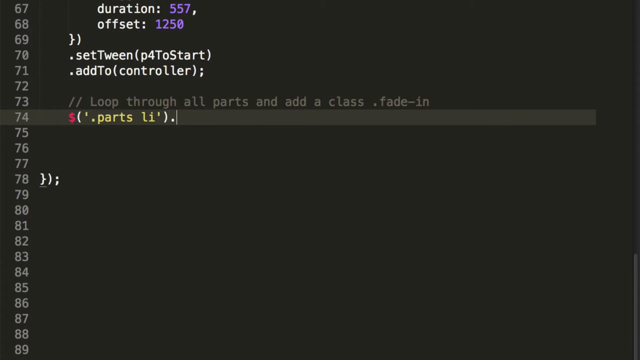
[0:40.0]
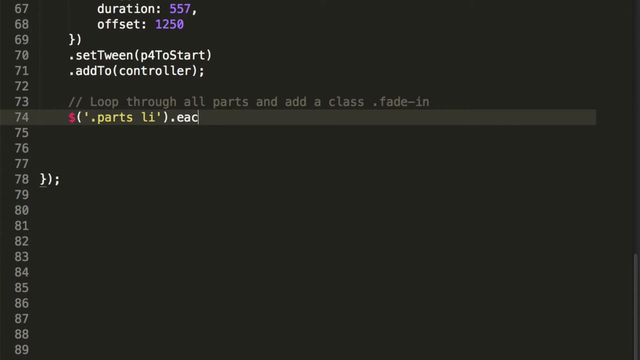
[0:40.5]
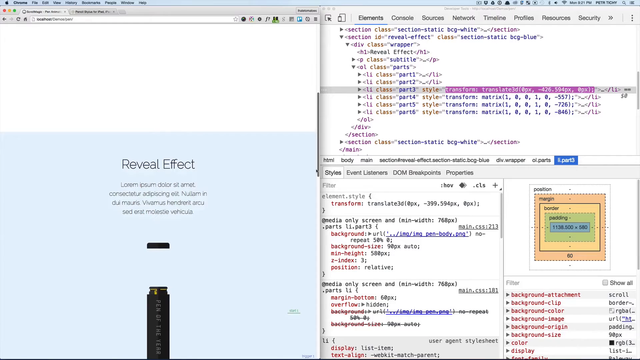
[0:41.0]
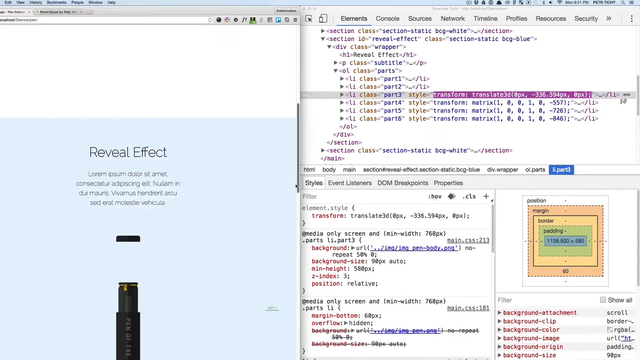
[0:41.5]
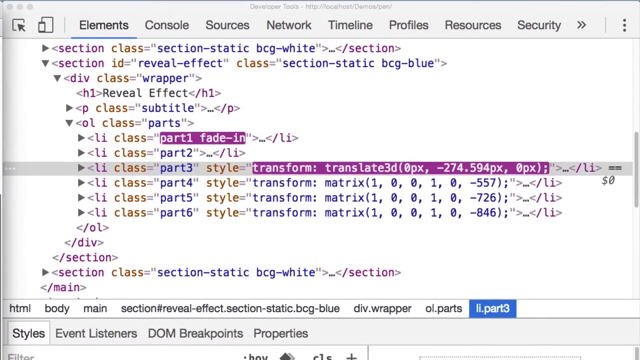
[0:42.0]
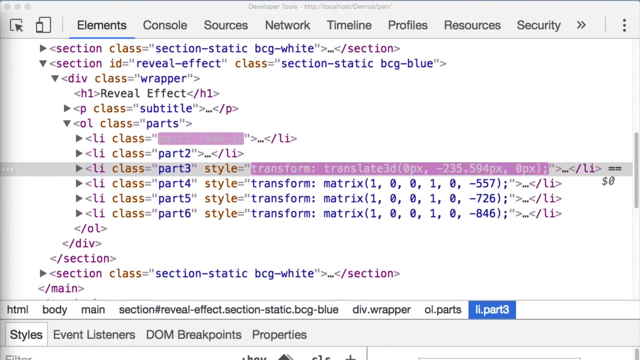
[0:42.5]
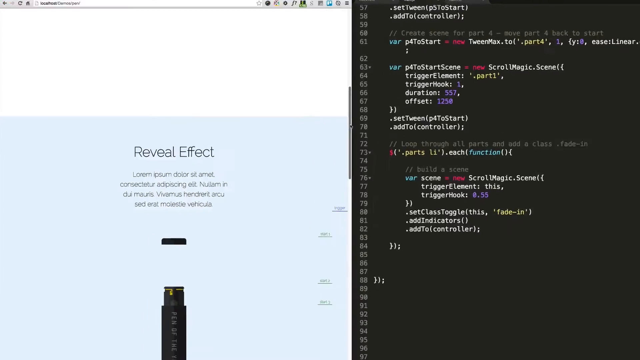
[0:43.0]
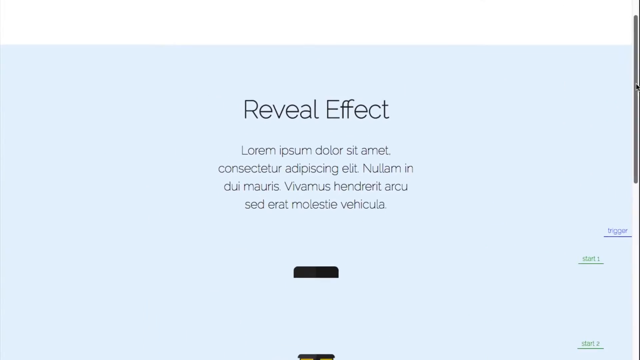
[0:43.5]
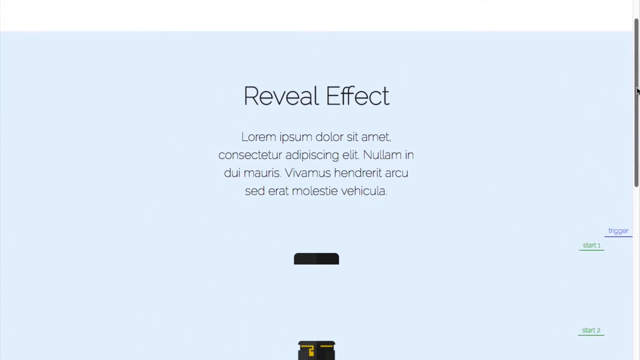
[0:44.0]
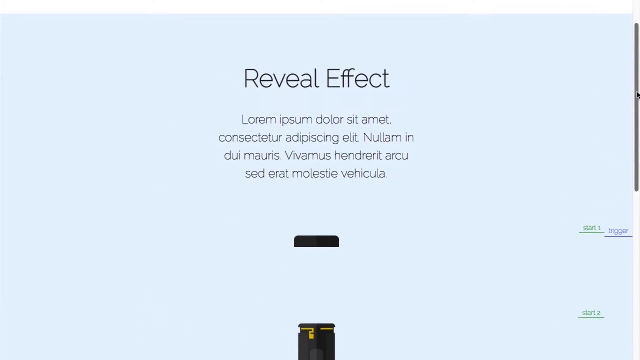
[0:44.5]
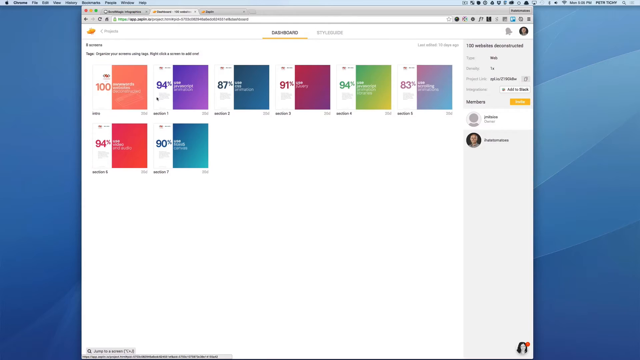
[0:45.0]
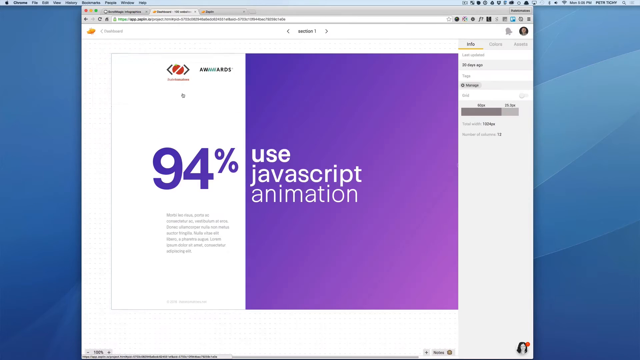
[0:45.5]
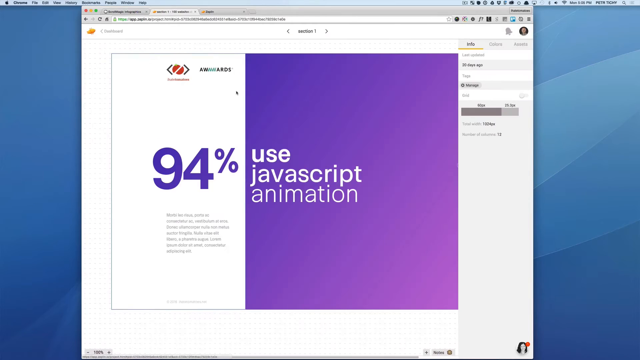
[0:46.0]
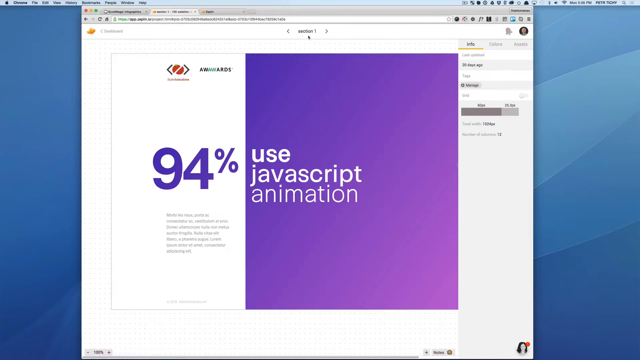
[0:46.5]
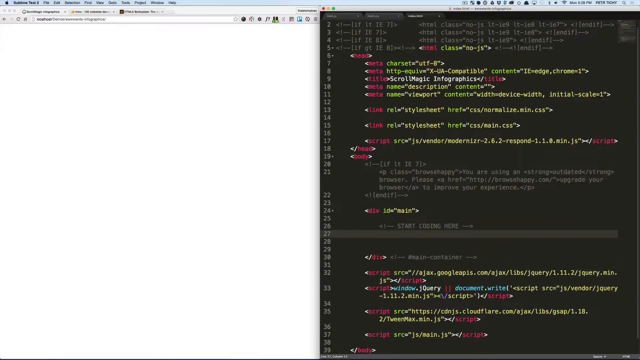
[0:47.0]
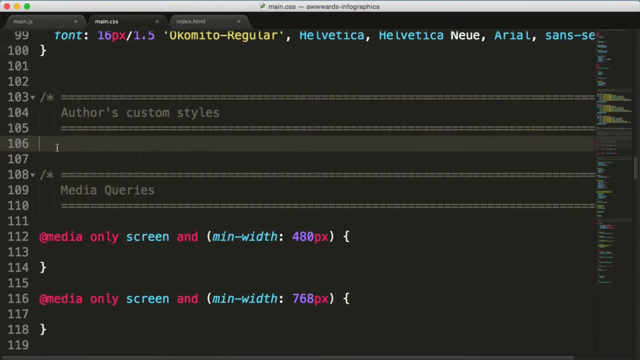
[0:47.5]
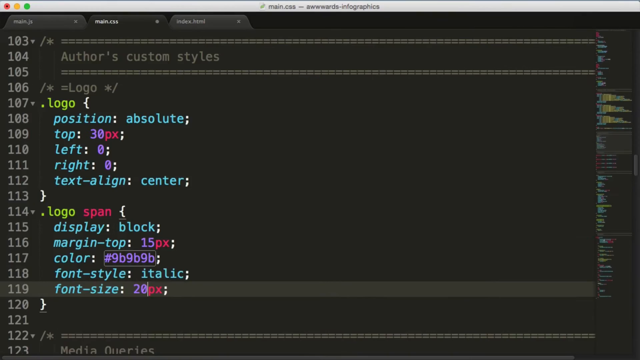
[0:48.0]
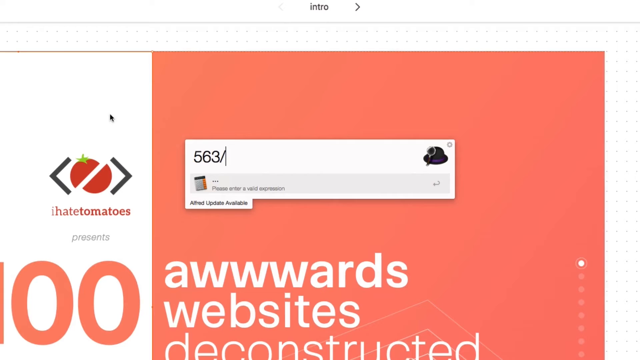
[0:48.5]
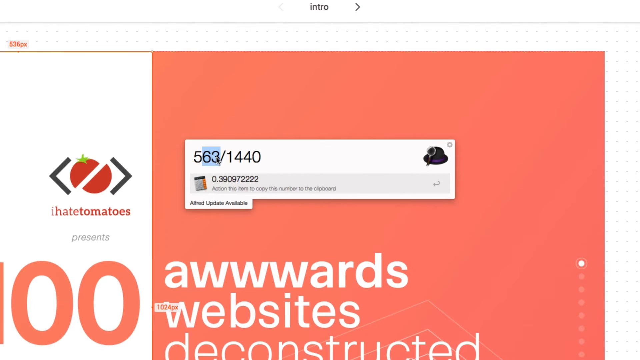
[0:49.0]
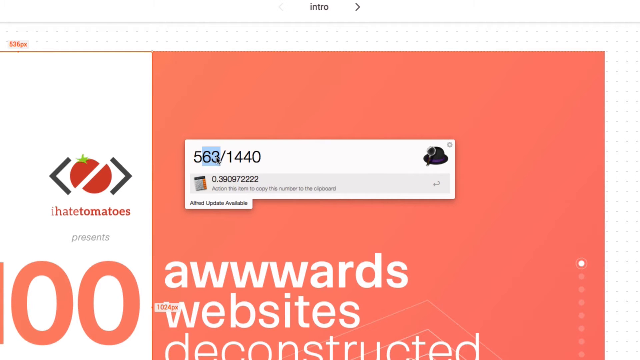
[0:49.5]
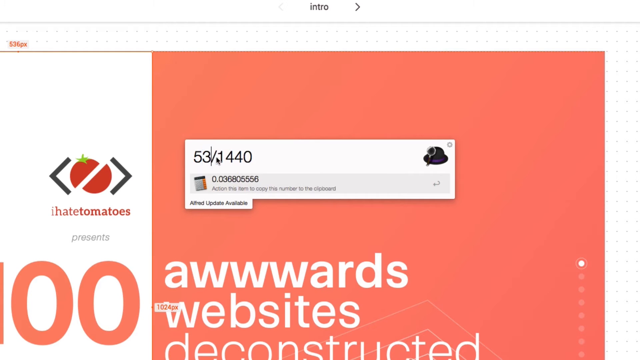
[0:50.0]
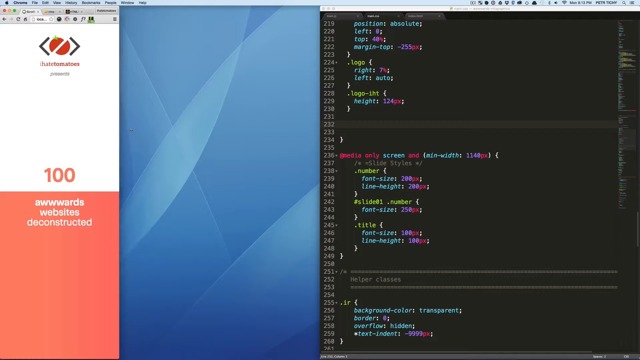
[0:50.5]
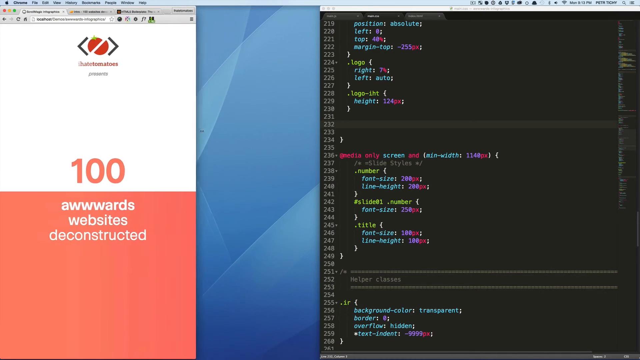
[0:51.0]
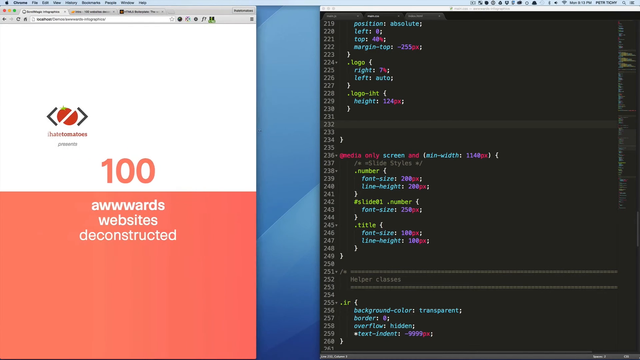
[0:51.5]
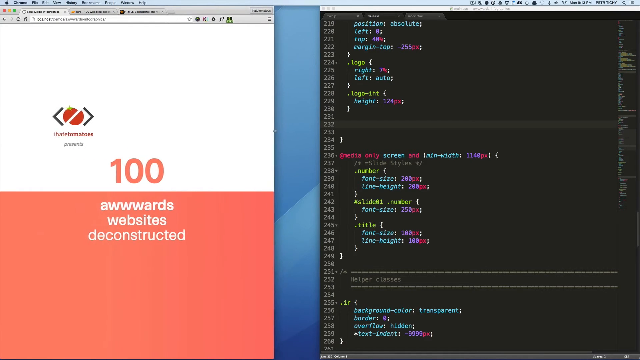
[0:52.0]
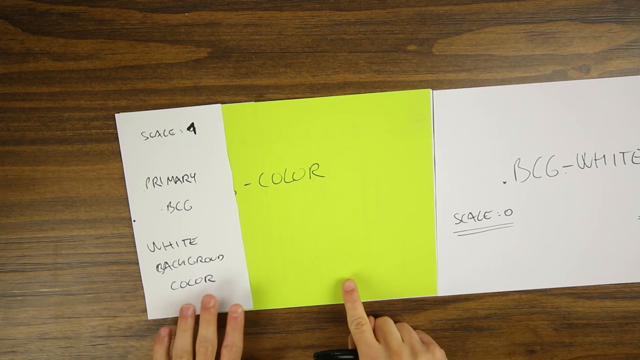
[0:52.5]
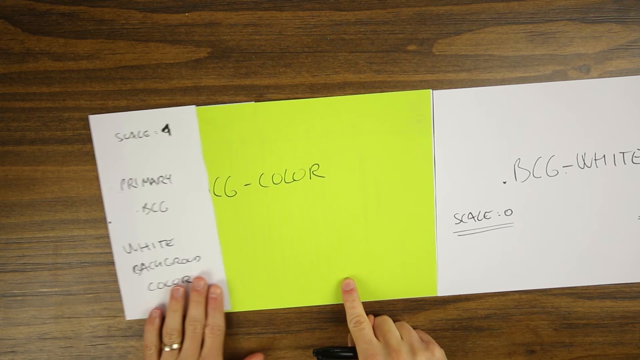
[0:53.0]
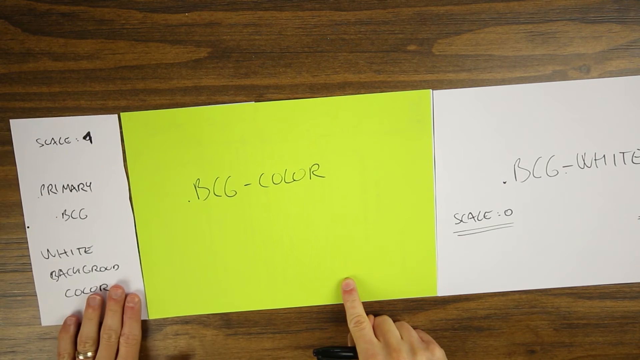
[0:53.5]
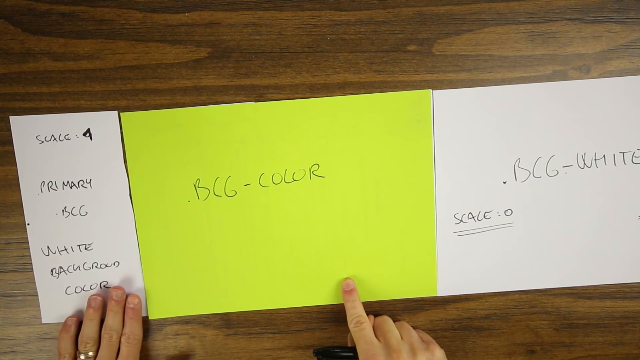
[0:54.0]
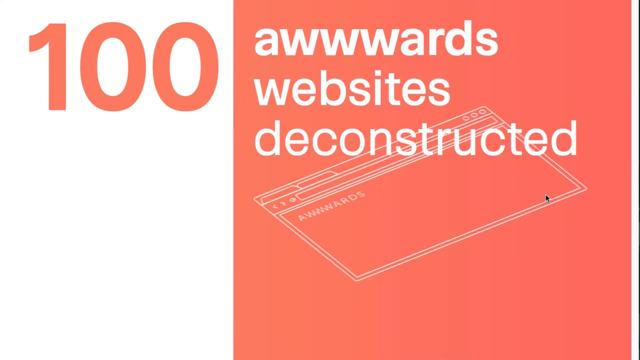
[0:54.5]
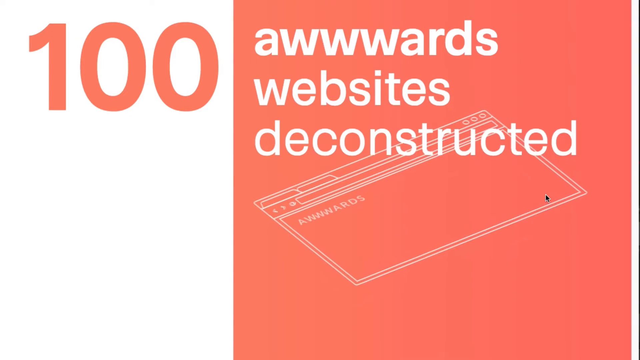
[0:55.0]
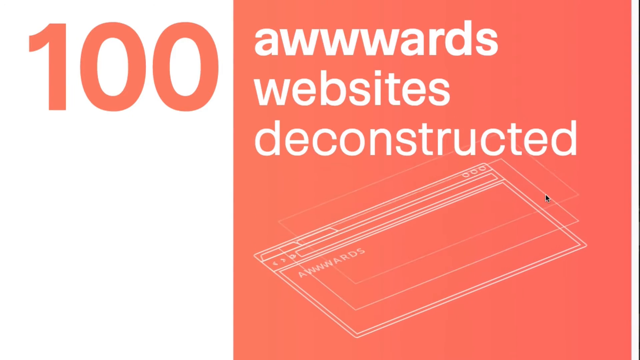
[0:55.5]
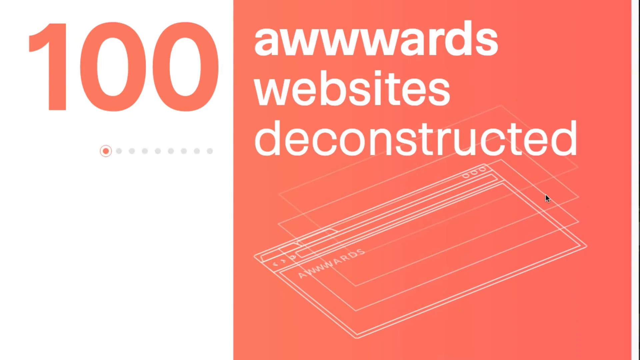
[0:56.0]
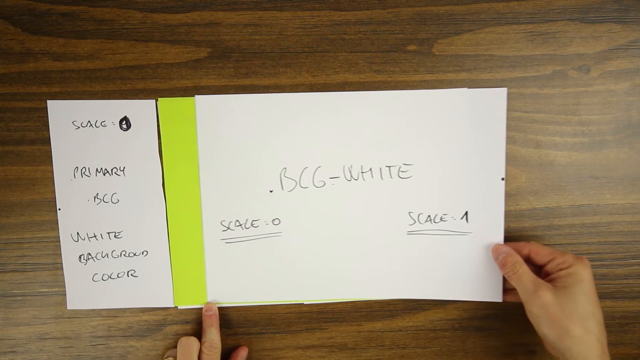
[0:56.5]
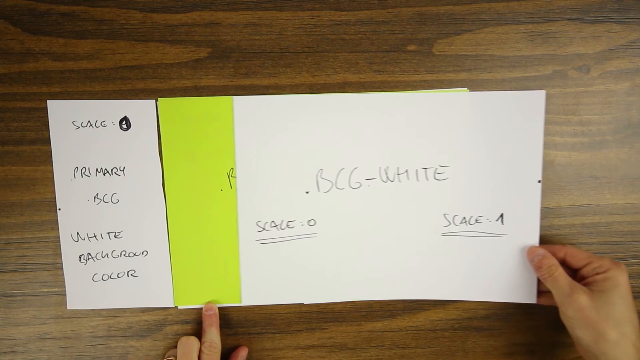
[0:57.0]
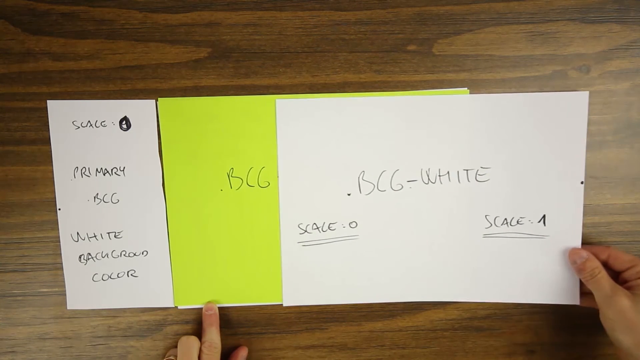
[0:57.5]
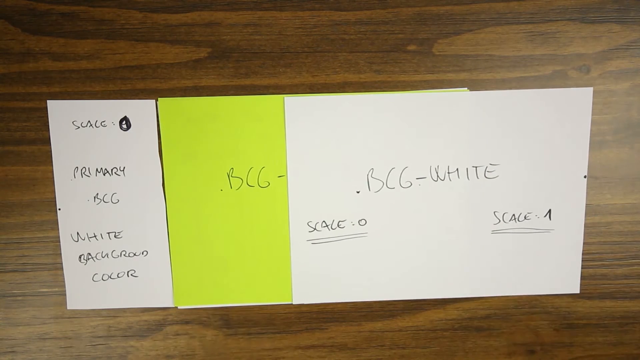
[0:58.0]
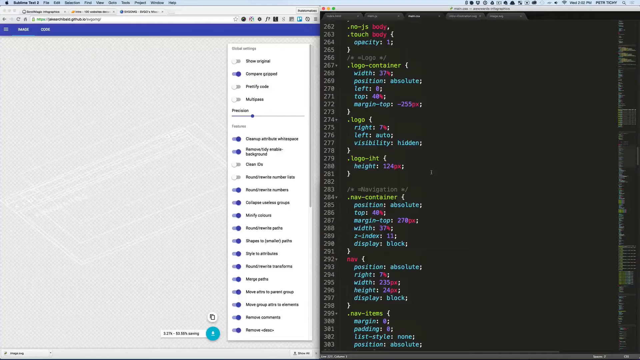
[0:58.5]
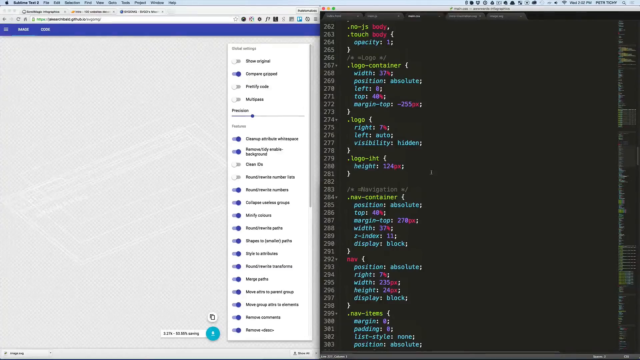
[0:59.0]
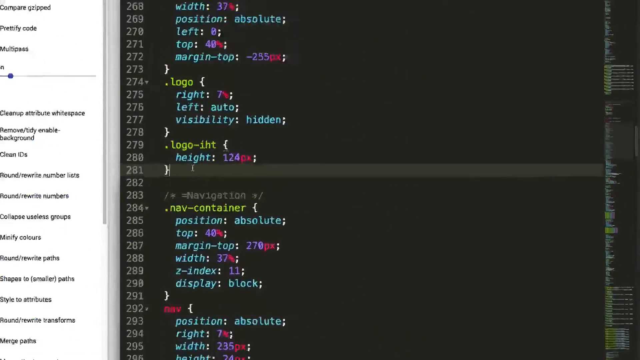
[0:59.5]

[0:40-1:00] A coding screen with a black background shows code in different colours: some white, some purple, with a portion in red and a portion in yellow. Next comes a split screen: the right side is full of multicoloured programming code, and the left side shows what looks like an advertisement that says "reveal effect", with generic placeholder filler text for additional information. Underneath that is a black line. The view moves to the right side of the screen and zooms in on the top portion, highlighting code: an li tag with class equal to part three and a style of transform translate3d with 0px, followed by the closing li tag. What looks like another advertisement follows: a big block of squares that says "use JavaScript information", with what looks like a coding area behind it. There are multiple cuts back and forth between programming views, and what the code has produced appears to be shown. A logo appears of two brackets with a tomato in the middle; the tomato has a break through its middle so white space shows, and the line is pink.